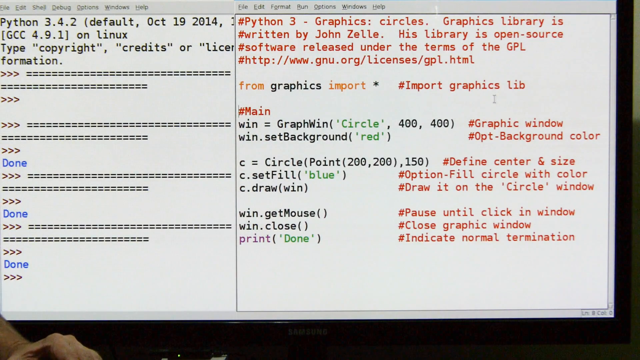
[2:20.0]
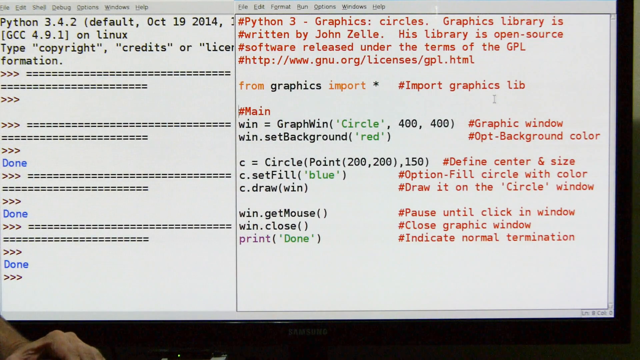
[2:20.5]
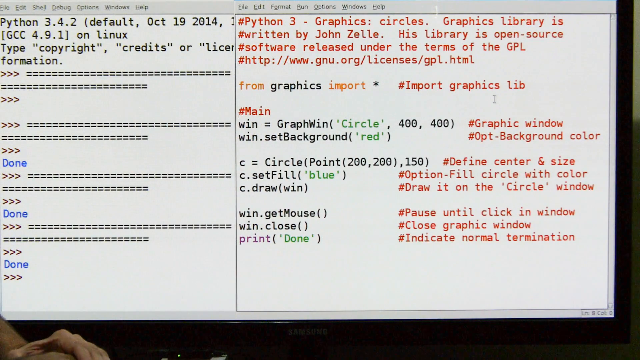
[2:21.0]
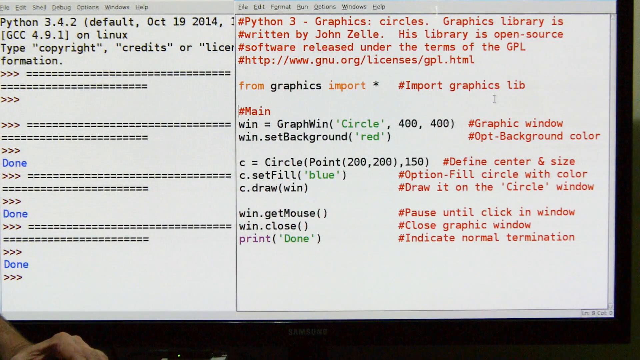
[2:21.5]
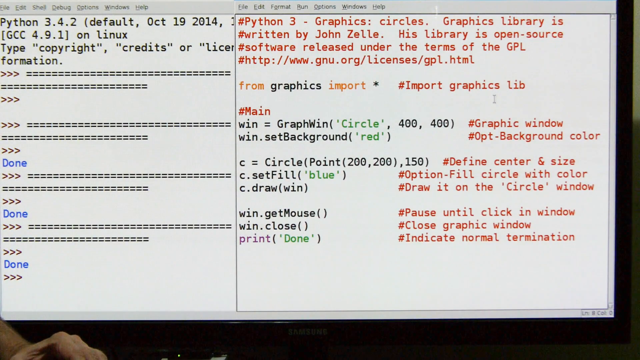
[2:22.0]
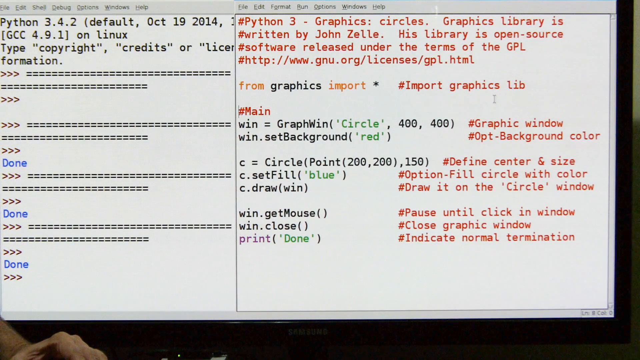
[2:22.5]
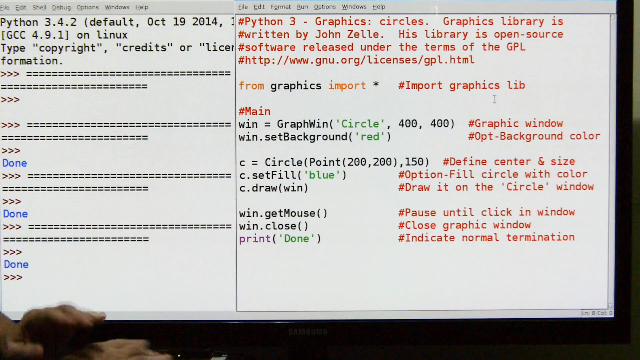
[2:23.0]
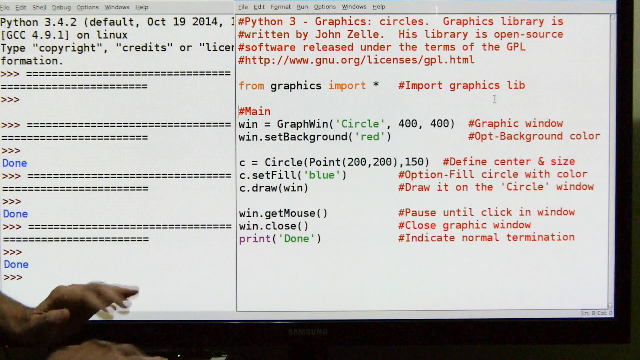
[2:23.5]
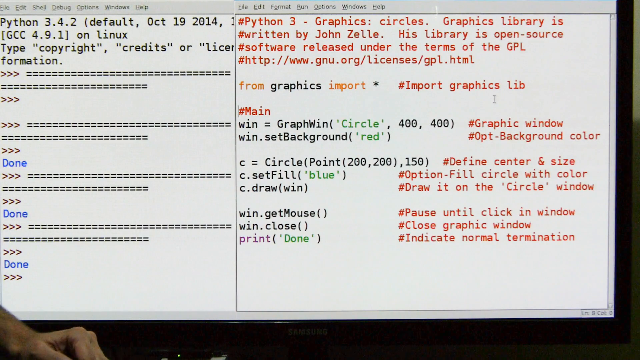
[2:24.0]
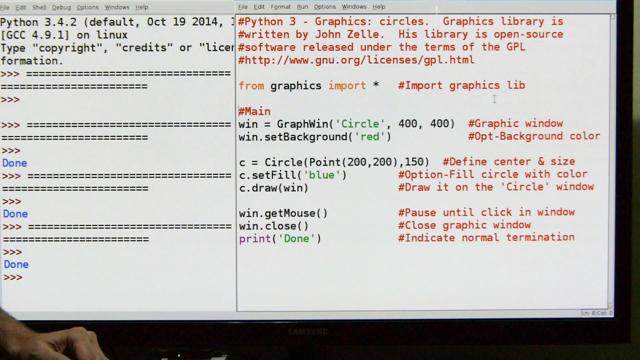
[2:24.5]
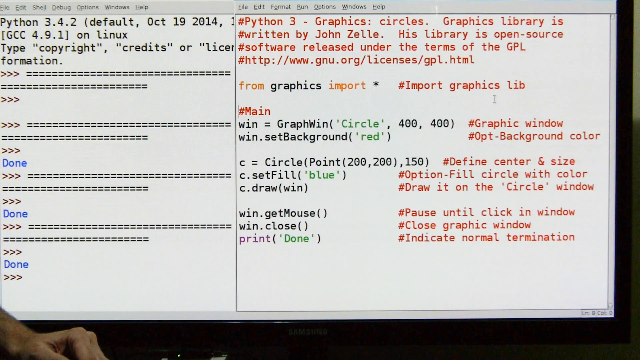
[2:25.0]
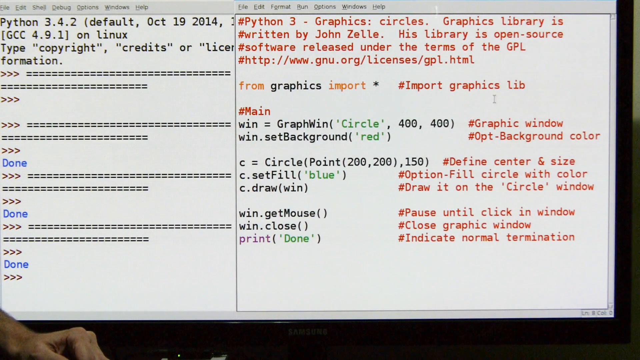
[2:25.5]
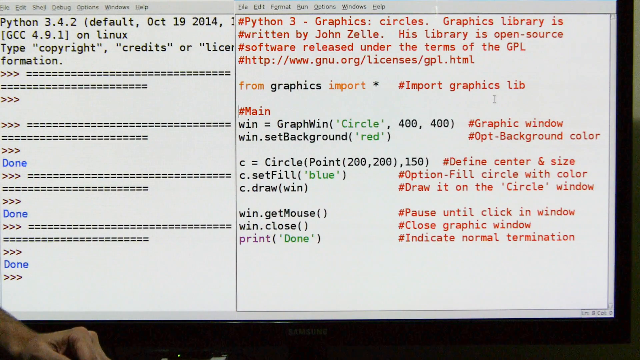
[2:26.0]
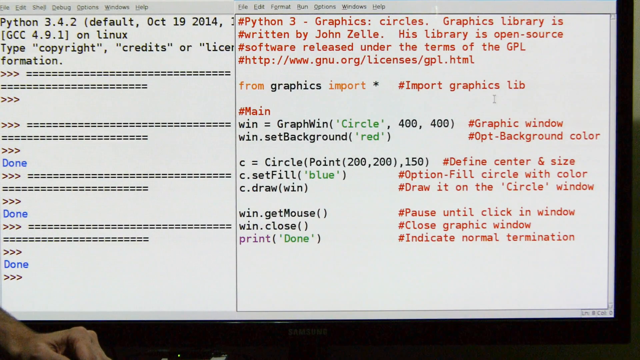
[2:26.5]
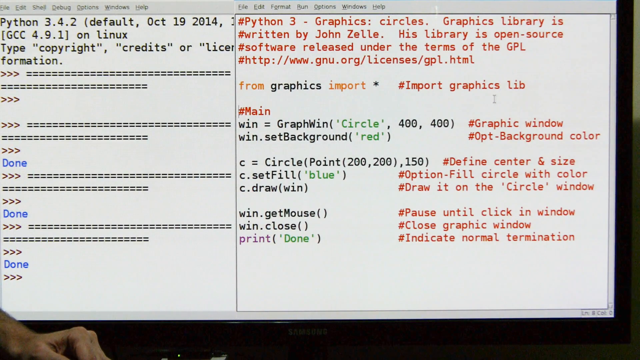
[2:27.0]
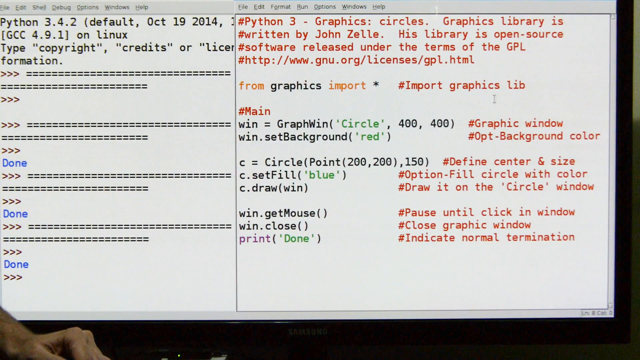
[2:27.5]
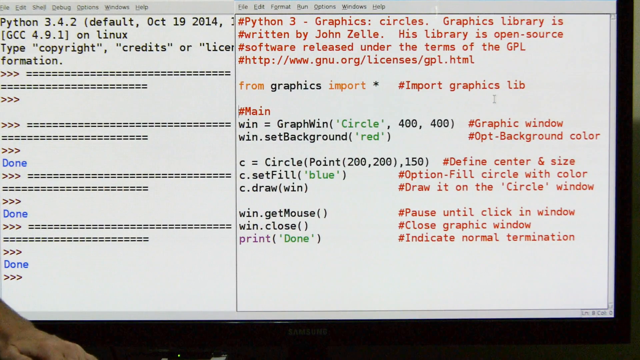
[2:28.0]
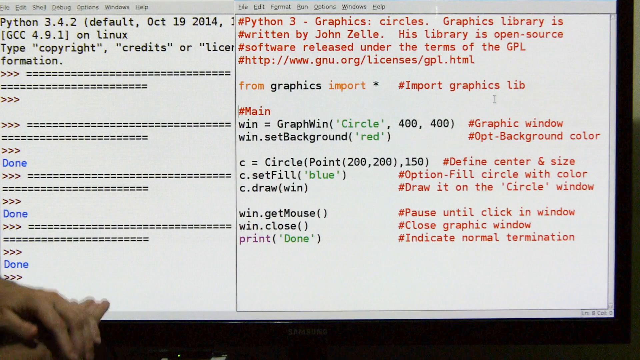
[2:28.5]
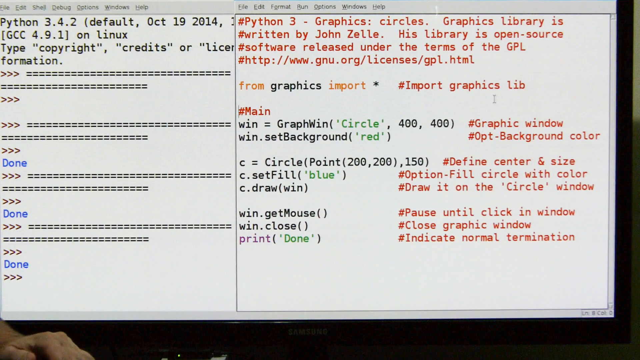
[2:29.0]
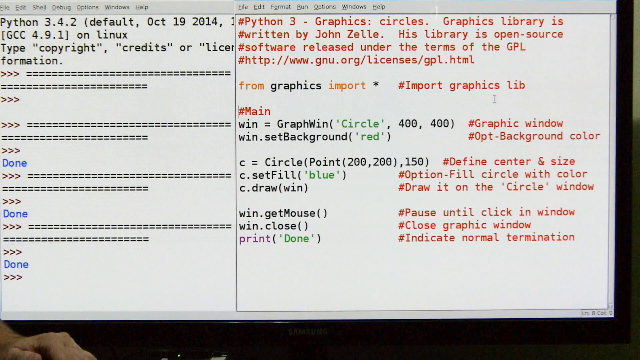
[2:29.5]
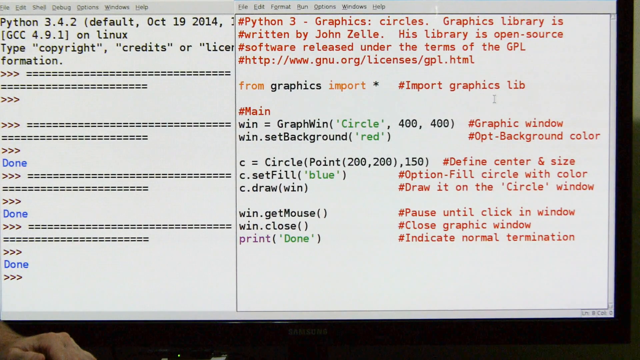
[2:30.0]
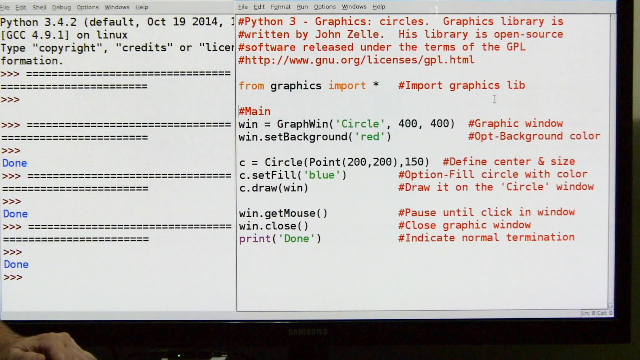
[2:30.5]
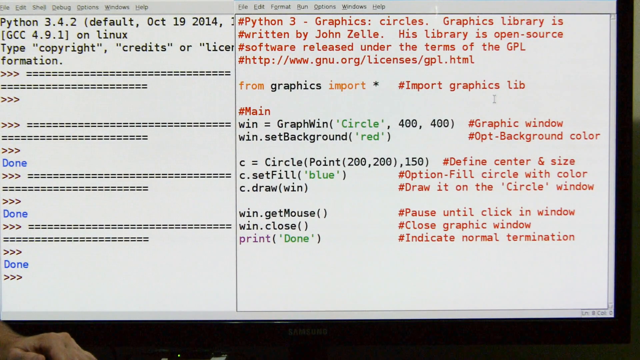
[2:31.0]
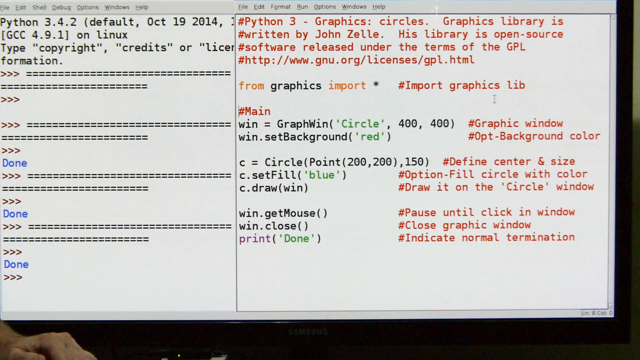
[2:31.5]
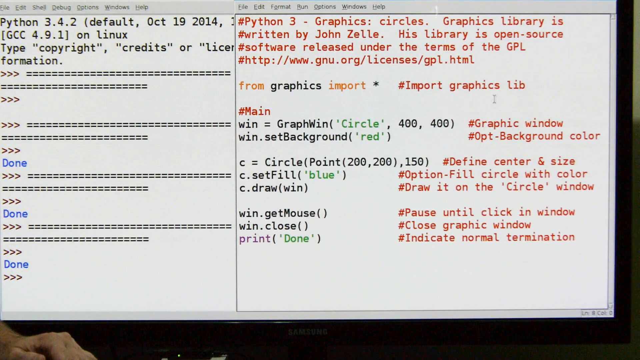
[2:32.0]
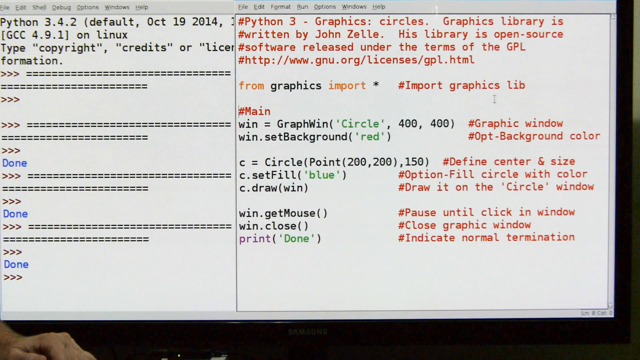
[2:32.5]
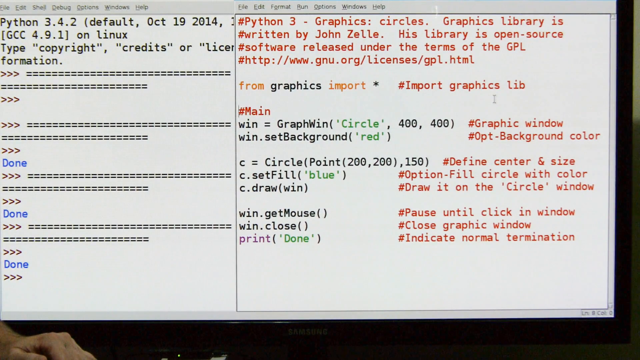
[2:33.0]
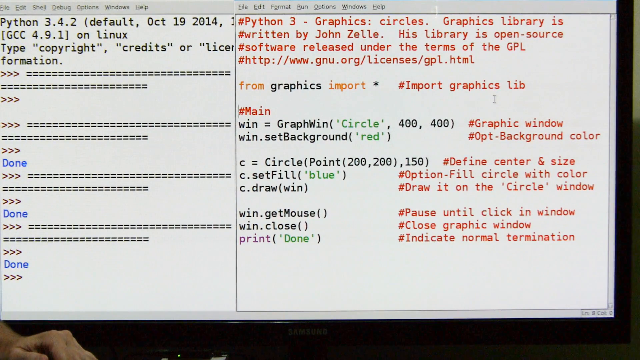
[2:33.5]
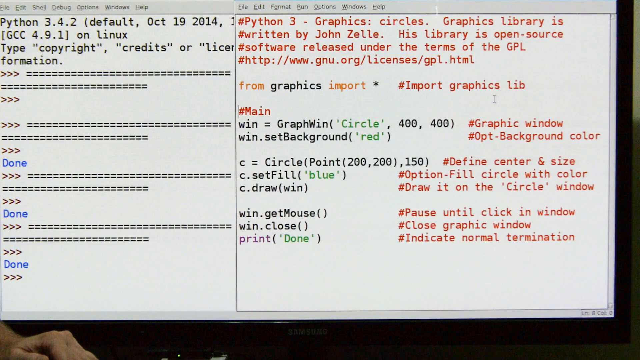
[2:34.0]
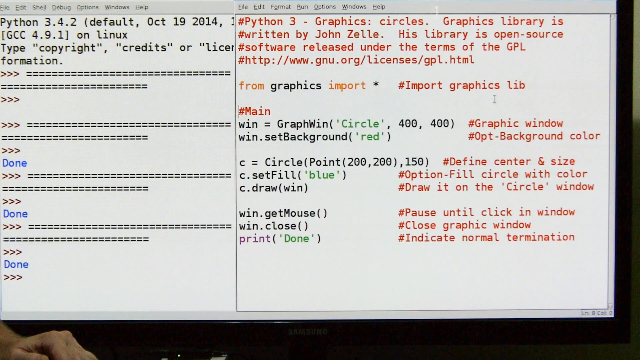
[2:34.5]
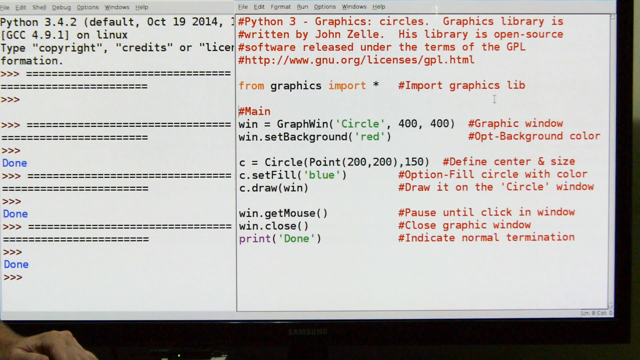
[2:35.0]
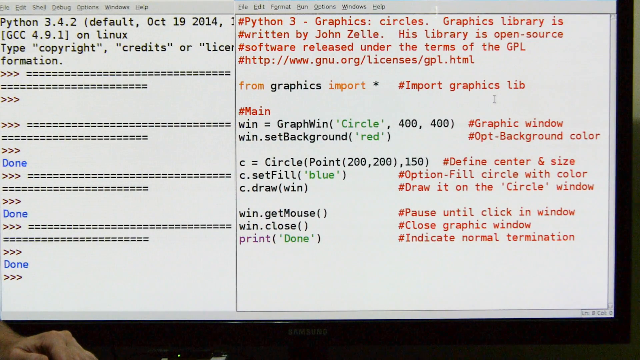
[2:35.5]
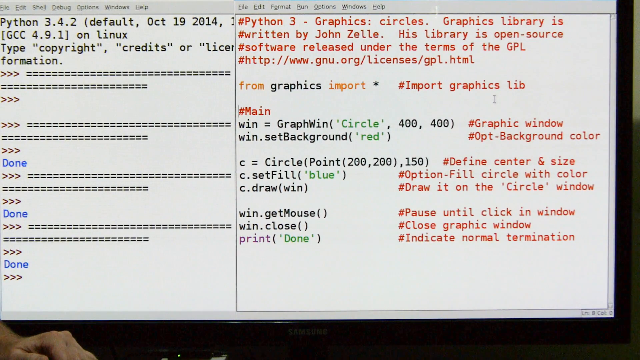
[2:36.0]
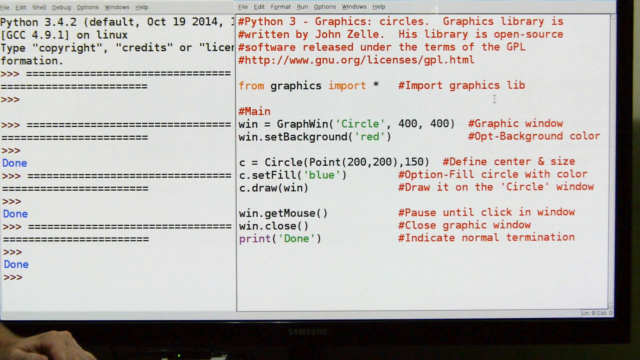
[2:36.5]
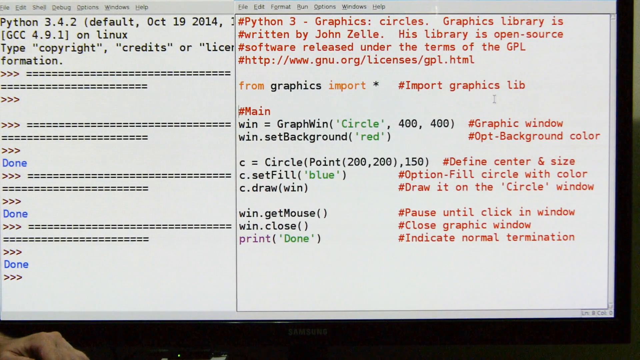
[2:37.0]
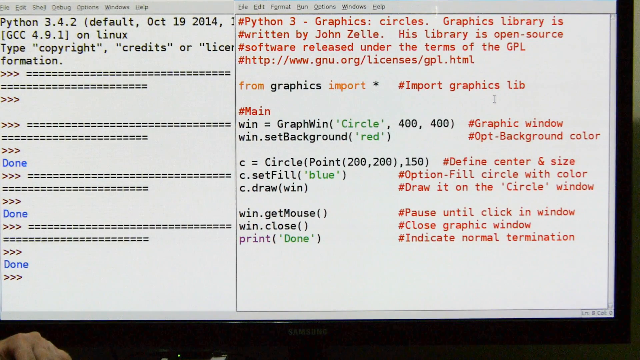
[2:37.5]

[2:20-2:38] The video wraps up the Python 3 graphics circle design: a 400 by 400 window, a circle filled with blue, and a red background. On the right, near the bottom, there is a print done line, and on the left side "done" is written three times. The instructor's hand gestures are shown in the corner; only his hands are visible, not his full body.